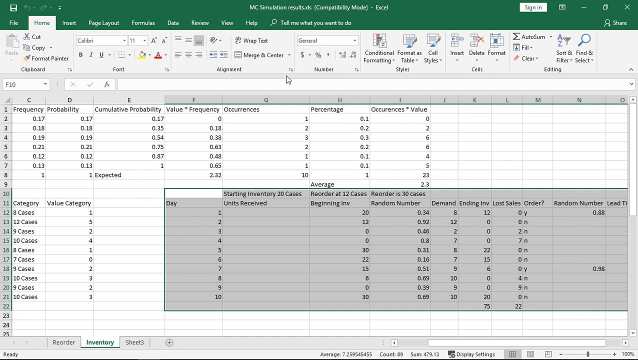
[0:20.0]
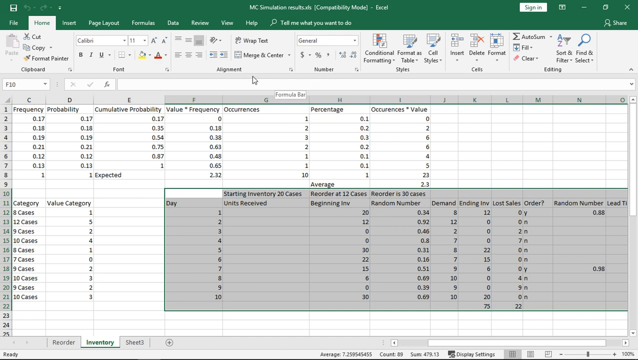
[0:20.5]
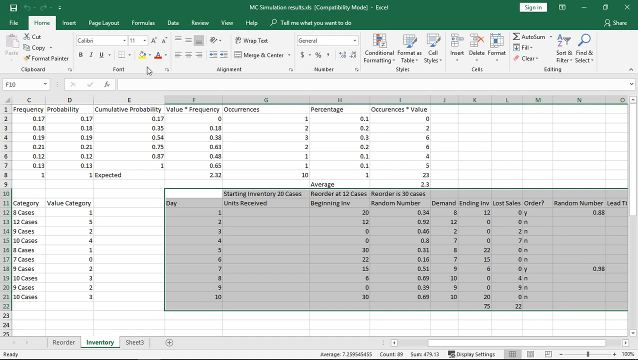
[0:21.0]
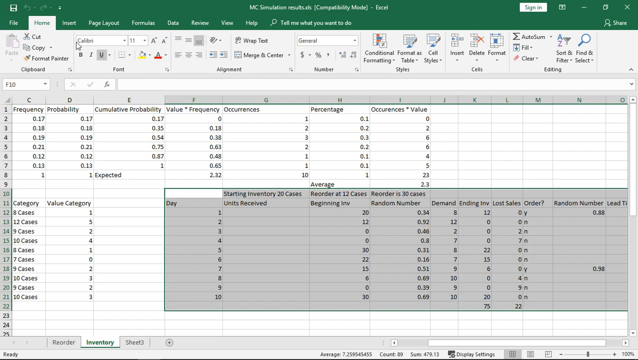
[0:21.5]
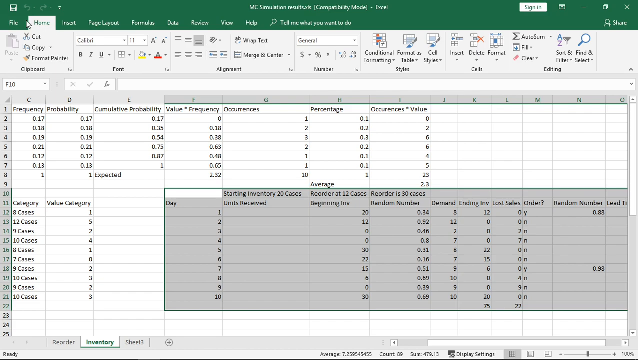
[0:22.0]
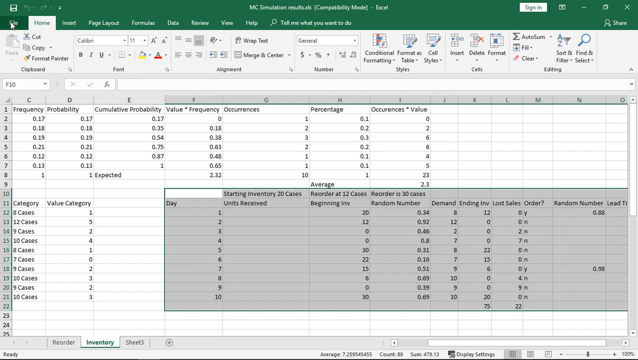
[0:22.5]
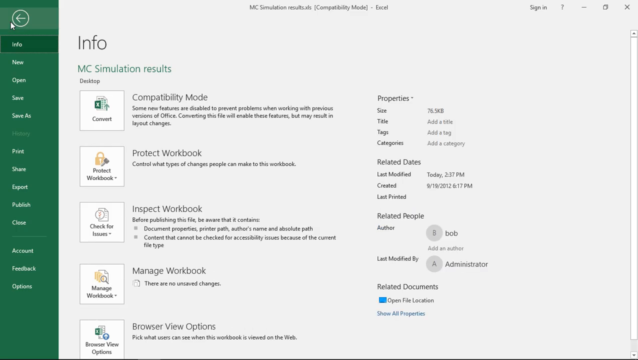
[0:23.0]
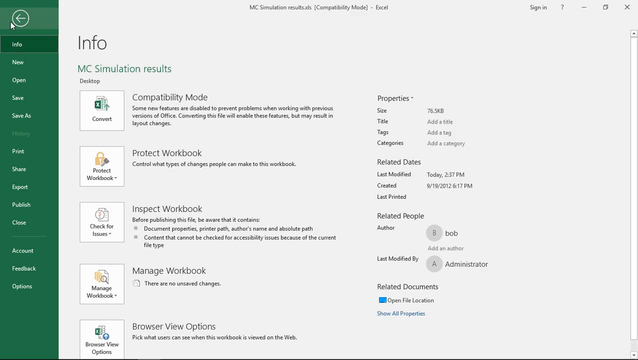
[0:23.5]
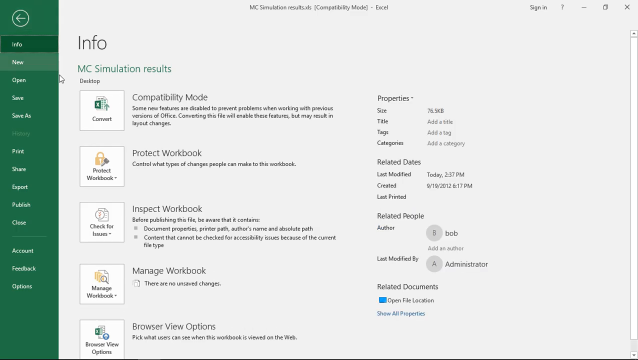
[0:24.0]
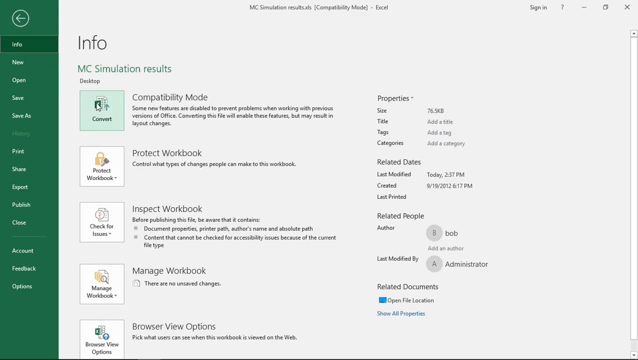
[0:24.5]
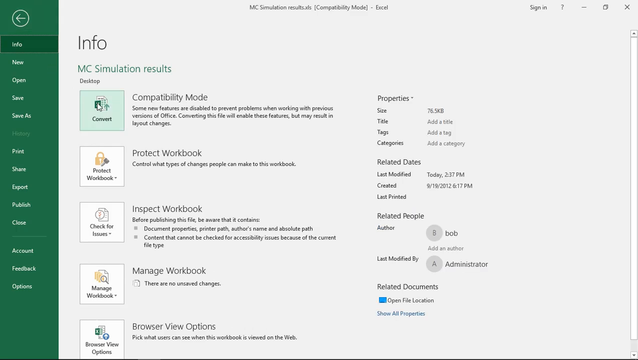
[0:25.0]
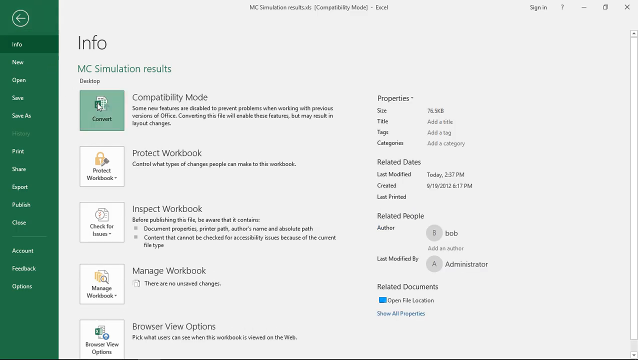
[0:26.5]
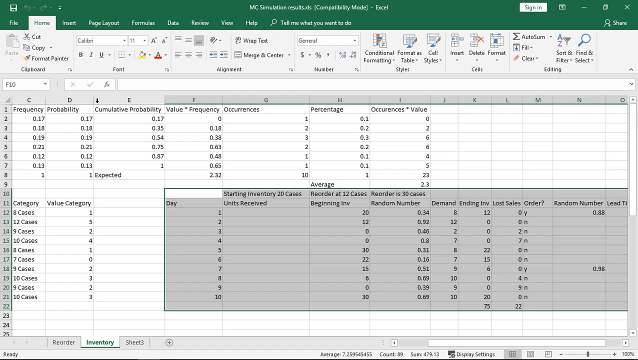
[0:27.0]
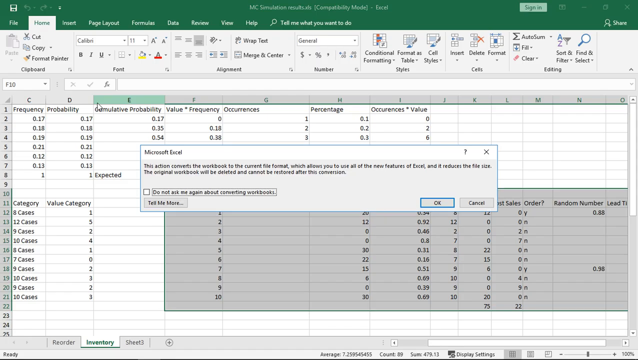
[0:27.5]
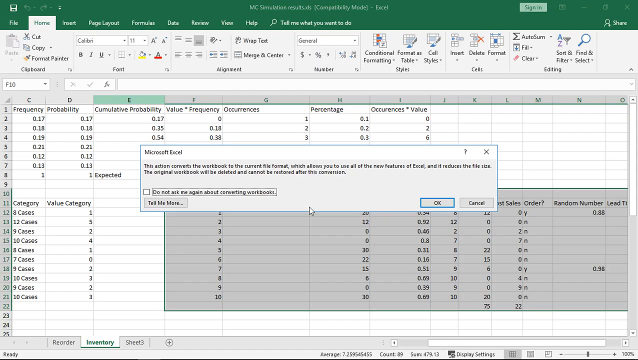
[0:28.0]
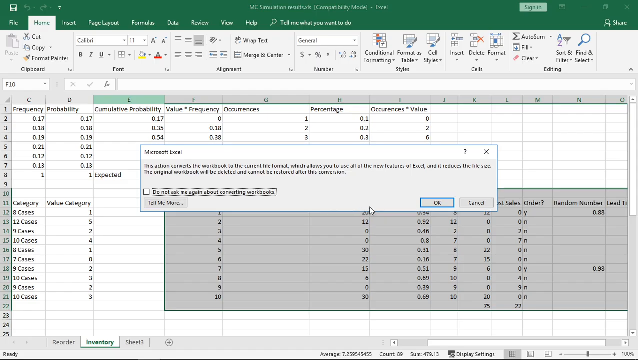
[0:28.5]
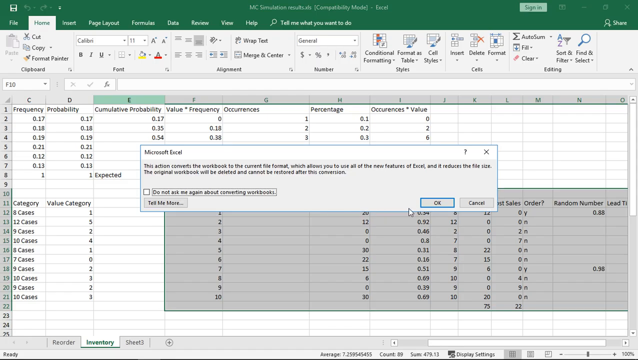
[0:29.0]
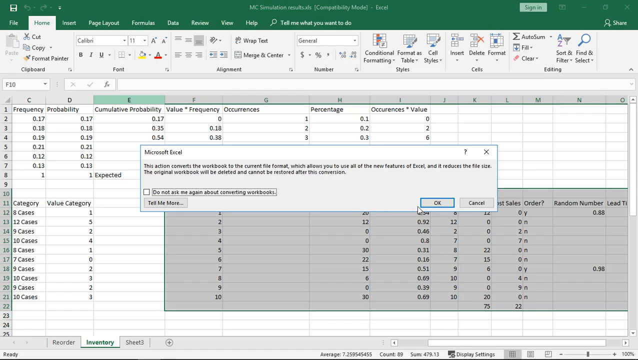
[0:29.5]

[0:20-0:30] The video goes to the files, and convert is pressed. A message appears and OK is pressed, and then OK is pressed again to agree with the selection. A gray box shows the highlighted area that is being converted. Little else happens; the highlighted area shows numbers, and different numbers are shown on the Excel sheet.